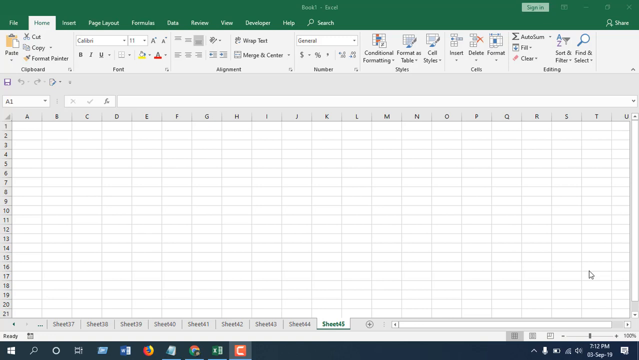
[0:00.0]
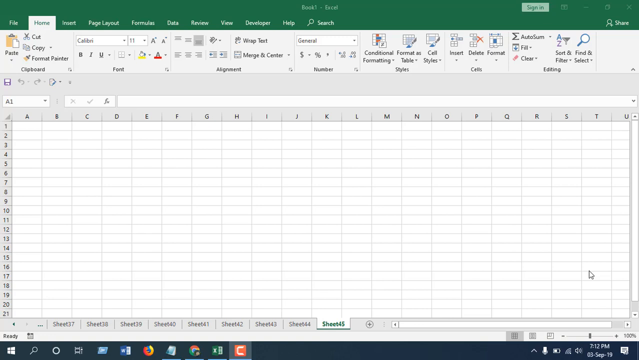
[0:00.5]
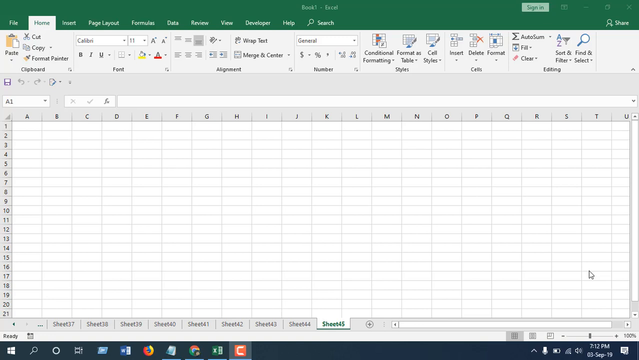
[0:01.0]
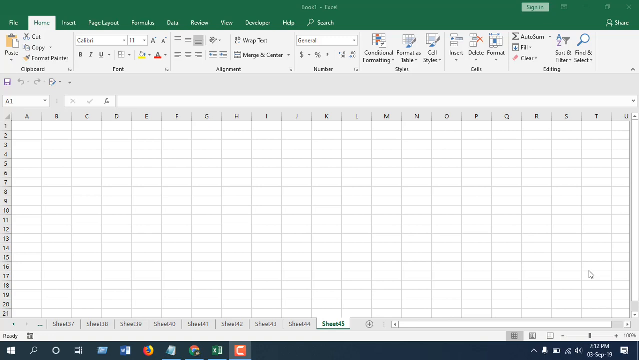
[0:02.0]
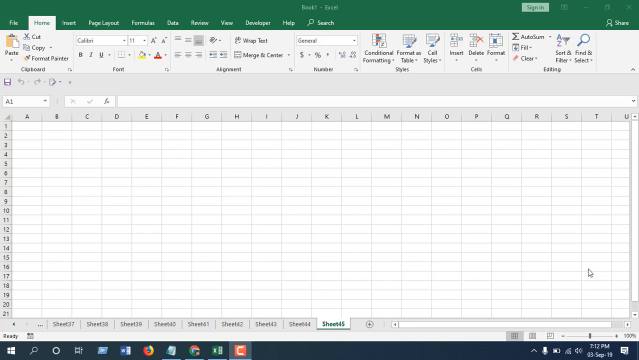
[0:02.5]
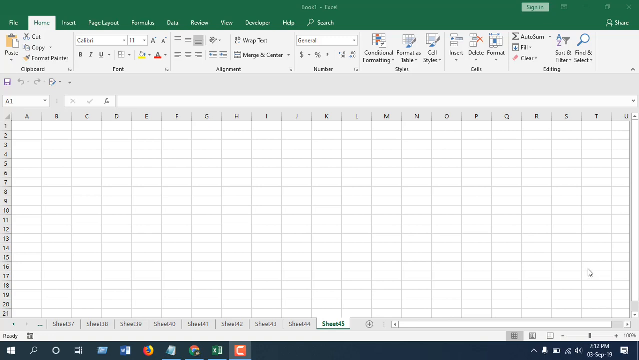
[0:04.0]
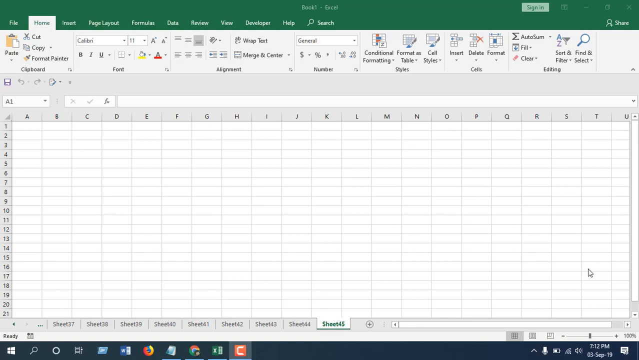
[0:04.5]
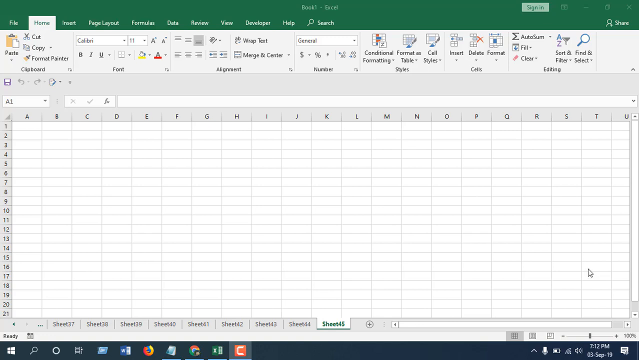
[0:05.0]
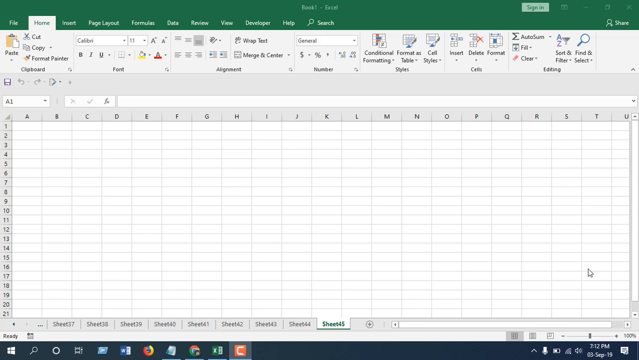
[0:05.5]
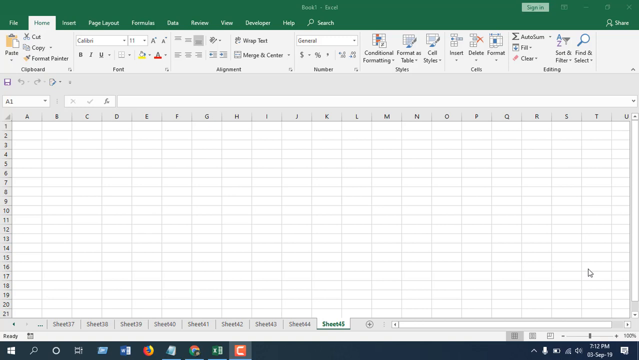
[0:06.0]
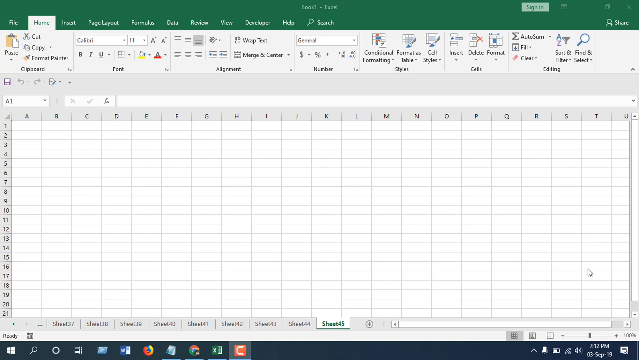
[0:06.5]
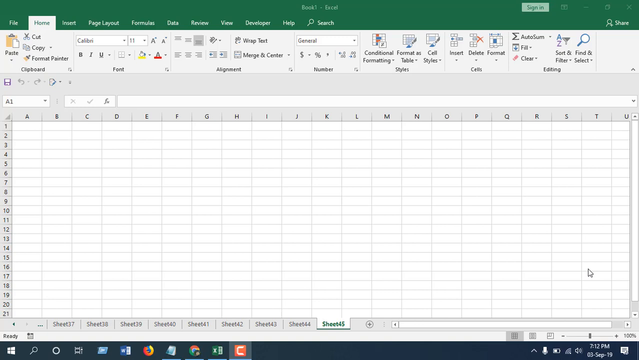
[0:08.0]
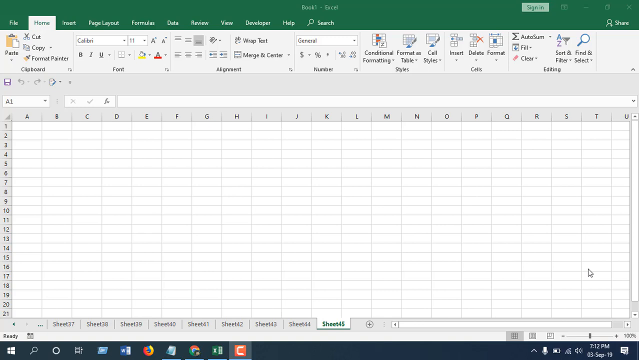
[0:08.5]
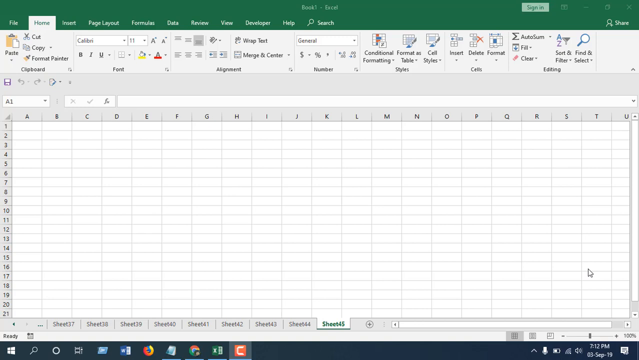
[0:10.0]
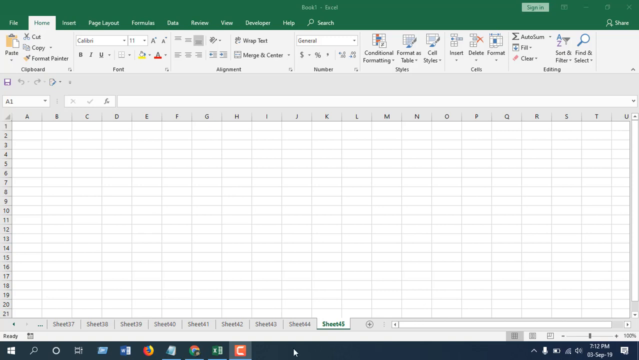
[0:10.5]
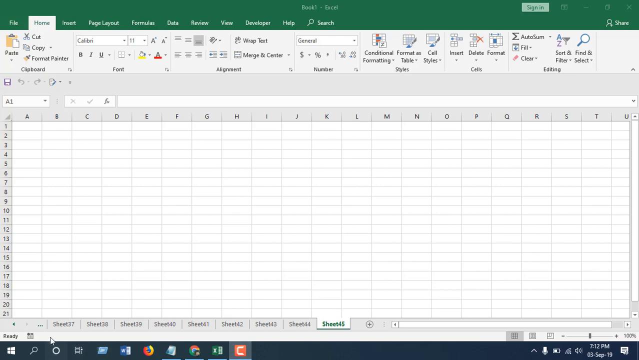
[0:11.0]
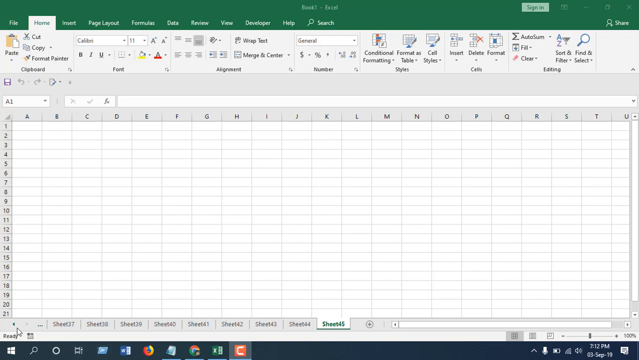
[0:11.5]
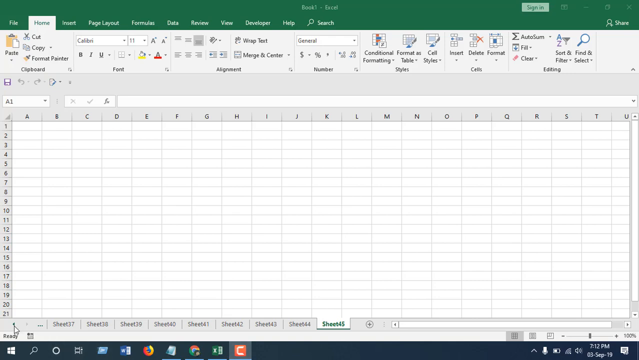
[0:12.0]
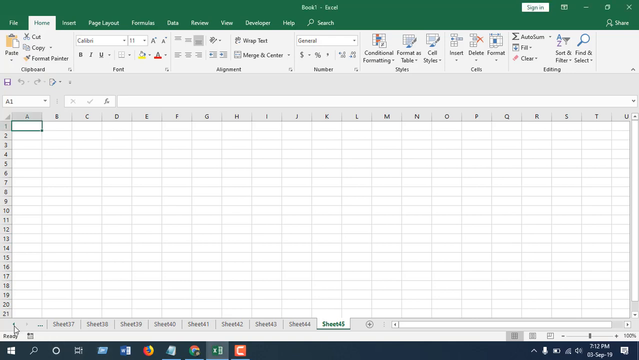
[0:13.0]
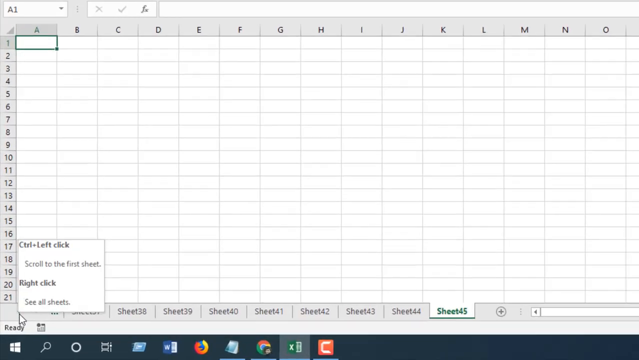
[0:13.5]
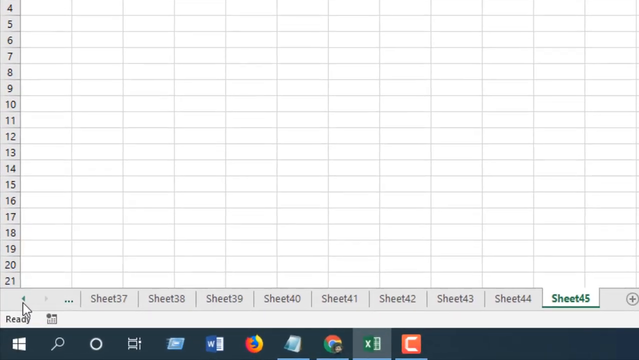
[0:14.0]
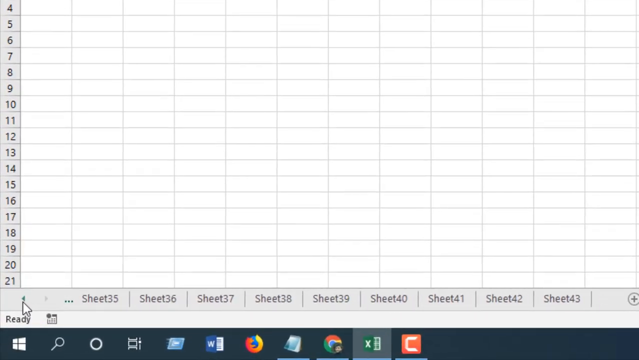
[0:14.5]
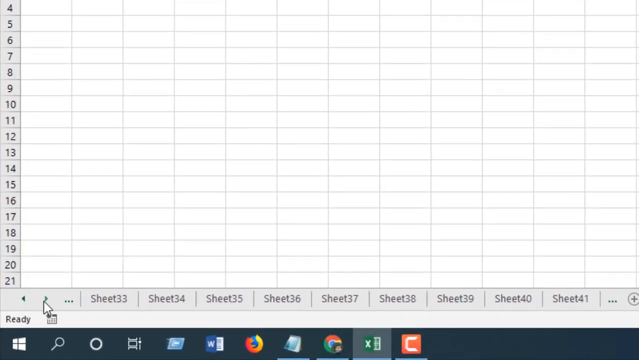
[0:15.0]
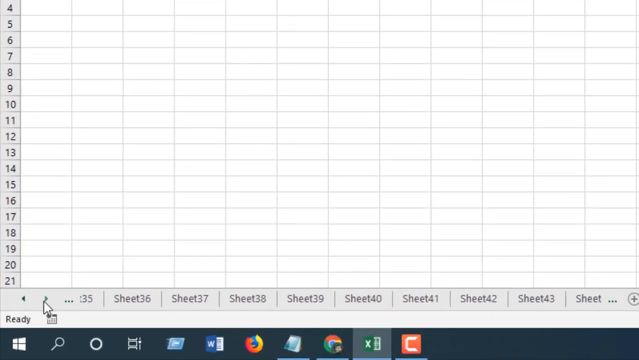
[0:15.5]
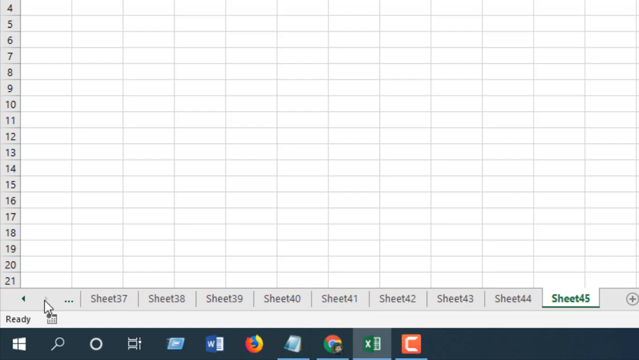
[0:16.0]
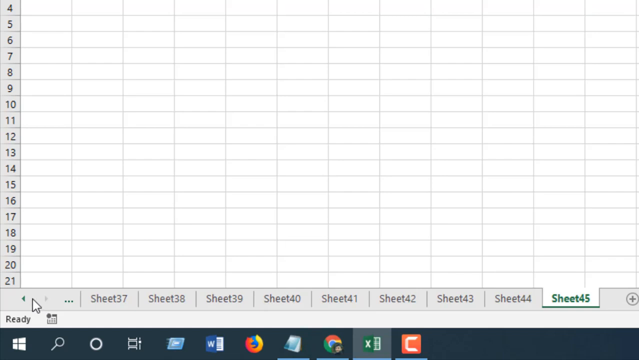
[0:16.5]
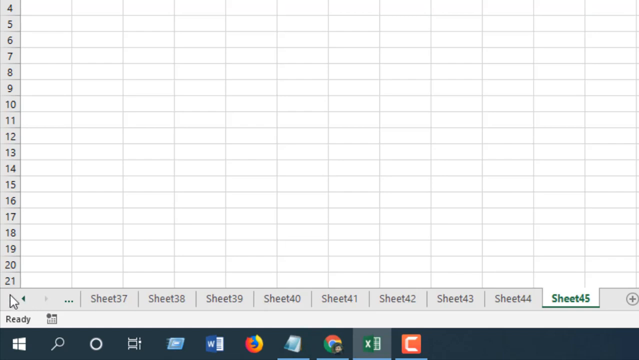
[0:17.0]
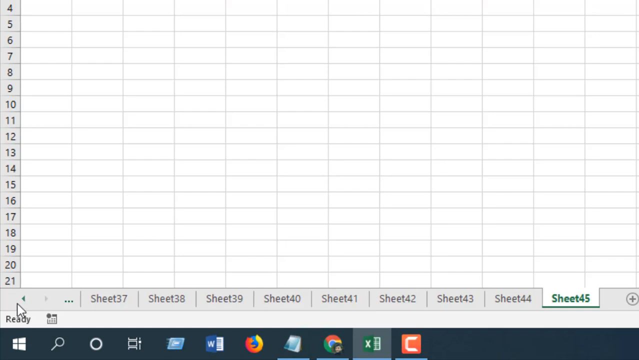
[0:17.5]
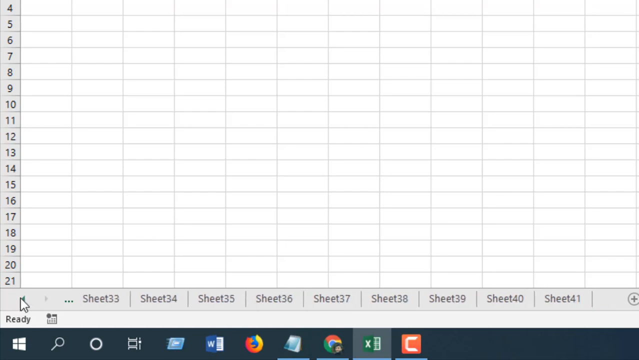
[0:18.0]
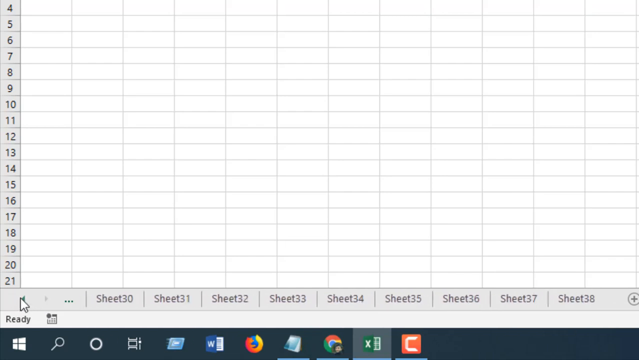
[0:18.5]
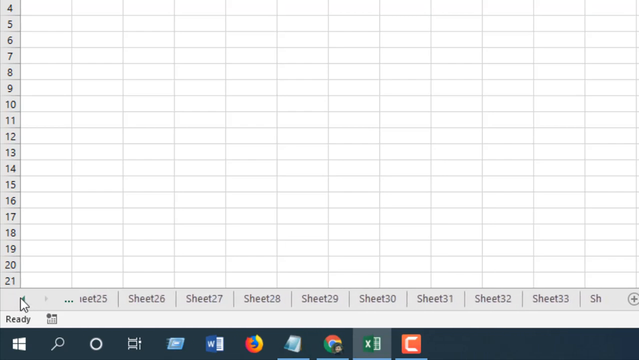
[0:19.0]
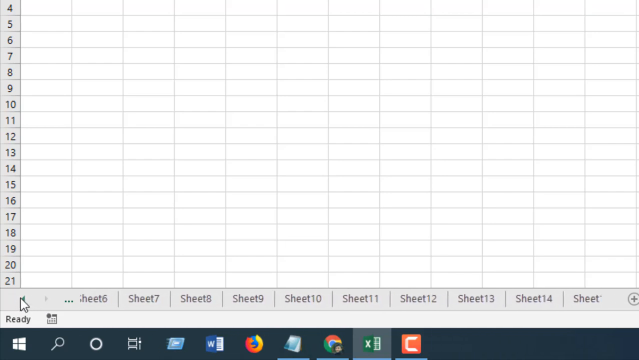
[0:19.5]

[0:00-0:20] A desktop displays a Microsoft Office Excel app or webpage with roughly 43 sheets open, empty and ready for data entry. The mouse moves to the bottom of the page and scrolls through the sheet tabs, clicking one by one from tab 44 all the way down to tab 1. No information is displayed on any of the tabs. The mouse slowly keeps clicking the bottom button to move to the next tab until the first tab is reached.